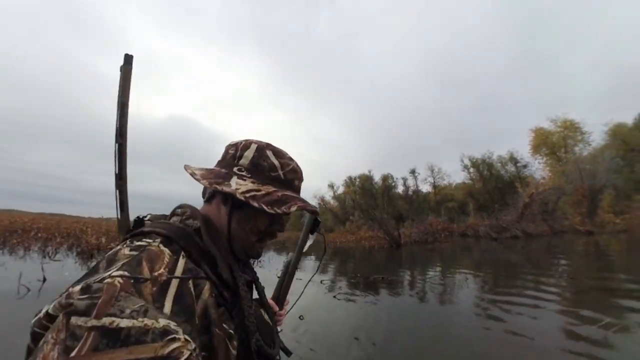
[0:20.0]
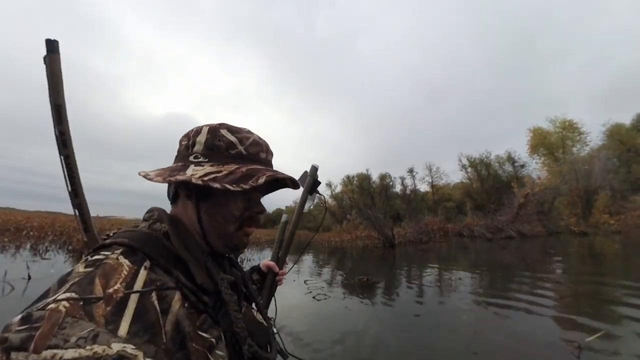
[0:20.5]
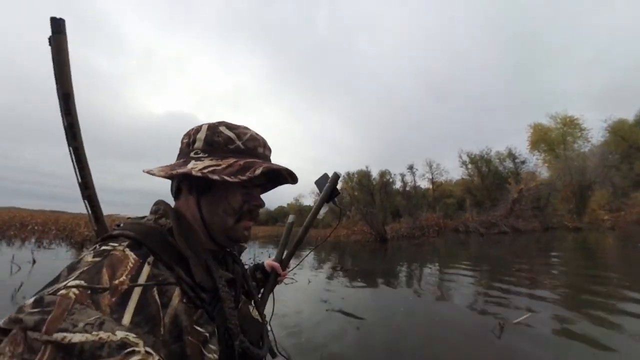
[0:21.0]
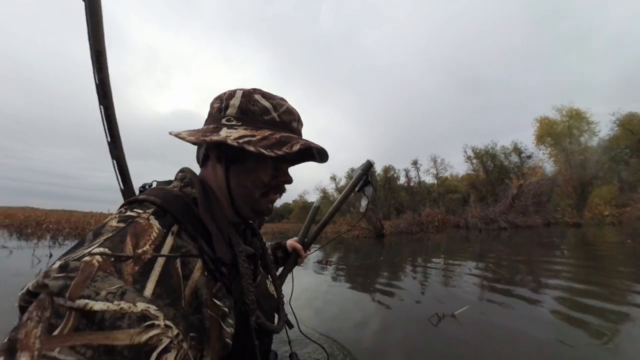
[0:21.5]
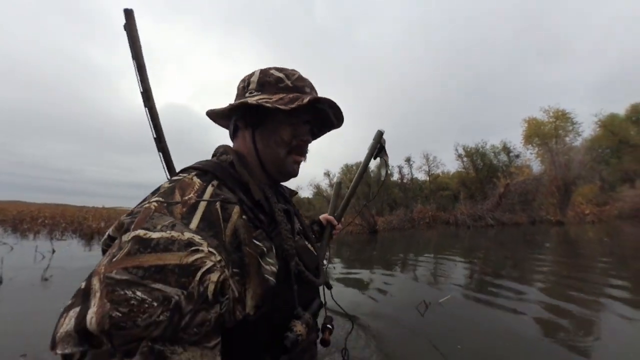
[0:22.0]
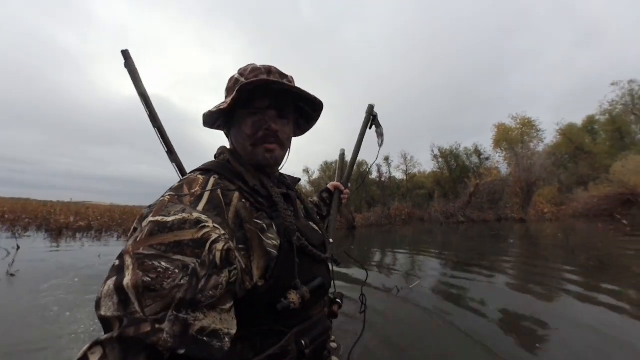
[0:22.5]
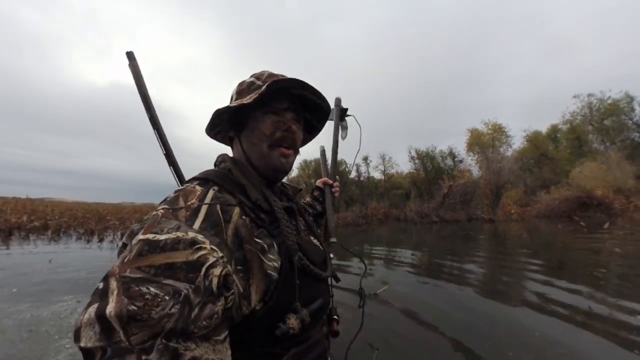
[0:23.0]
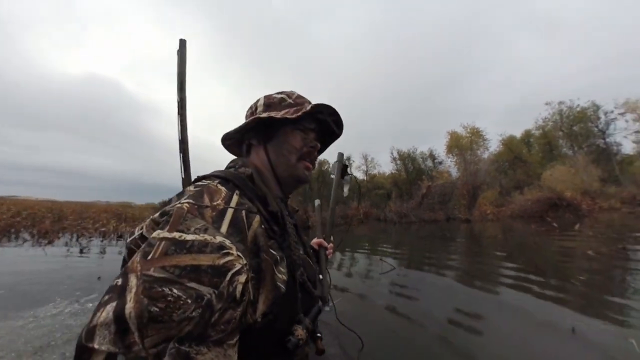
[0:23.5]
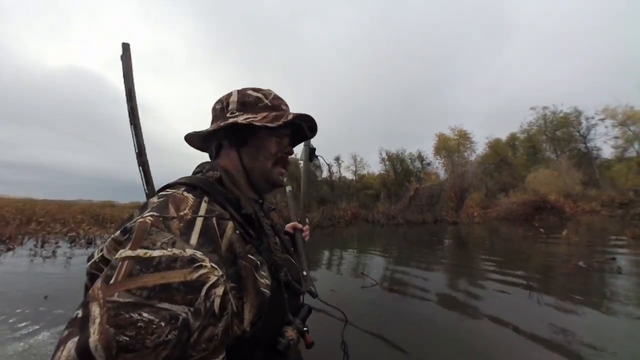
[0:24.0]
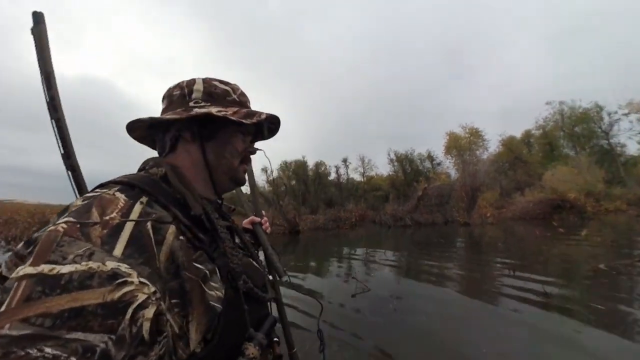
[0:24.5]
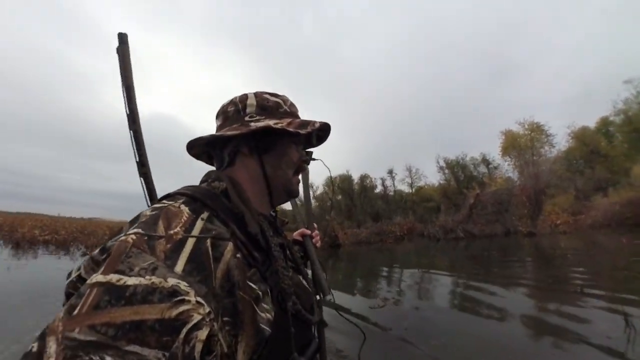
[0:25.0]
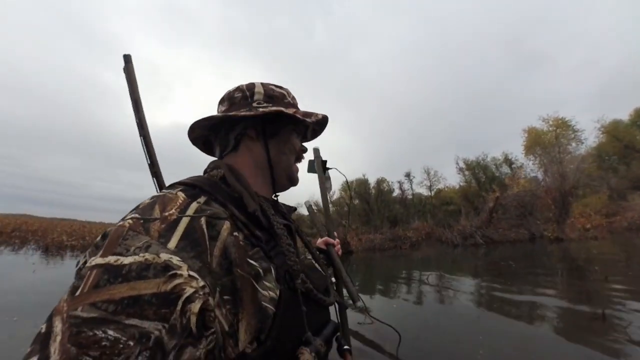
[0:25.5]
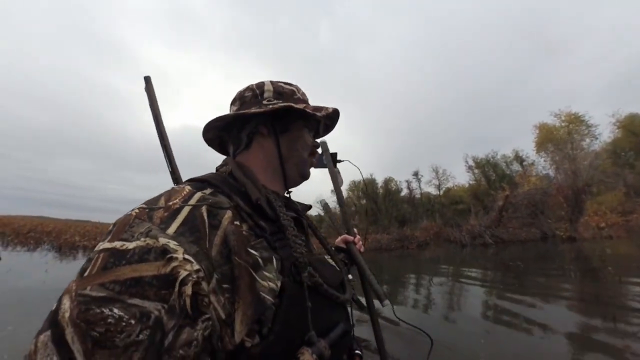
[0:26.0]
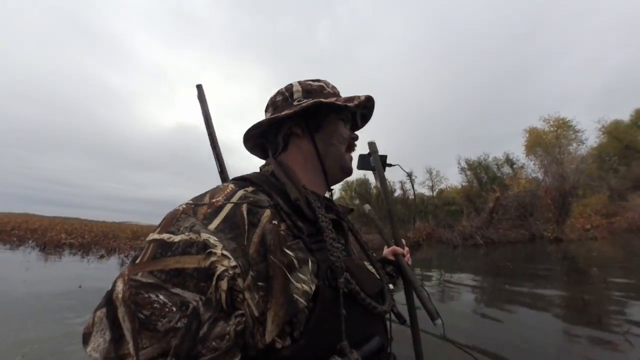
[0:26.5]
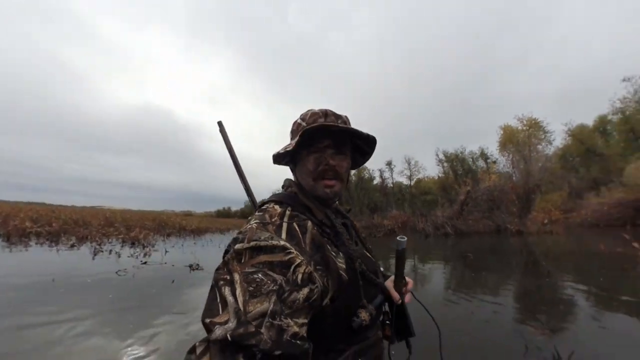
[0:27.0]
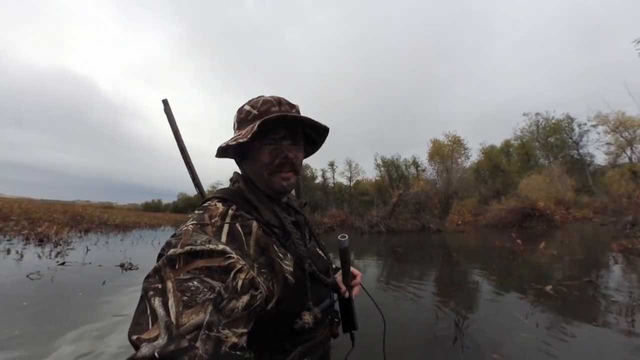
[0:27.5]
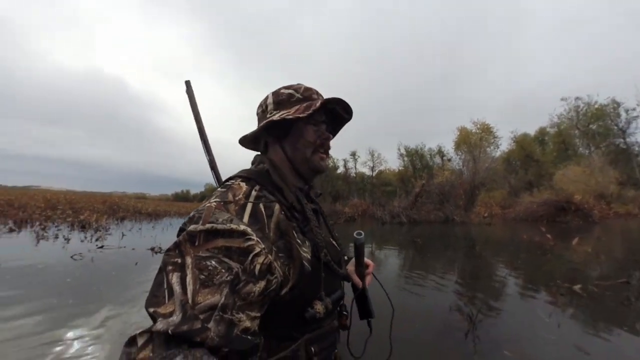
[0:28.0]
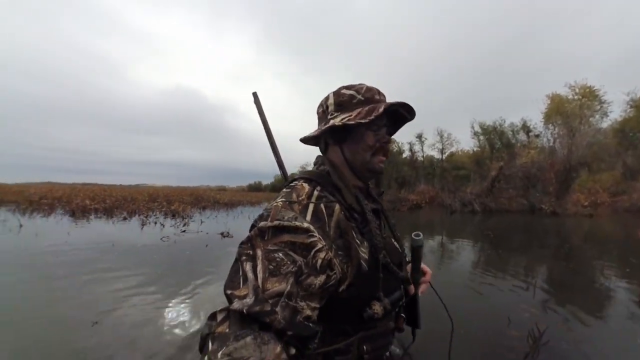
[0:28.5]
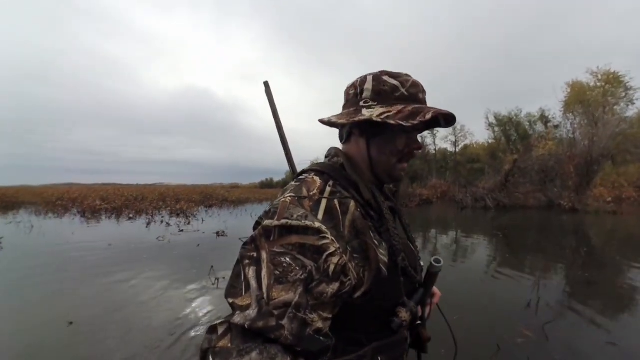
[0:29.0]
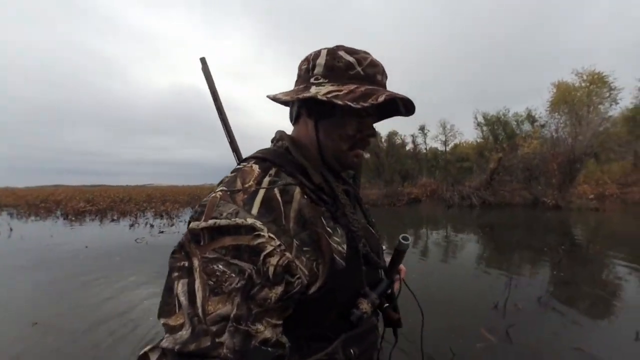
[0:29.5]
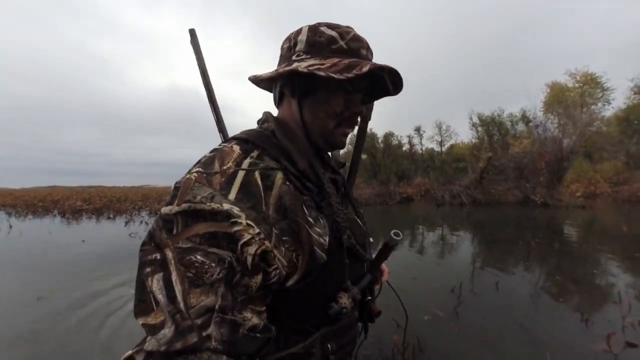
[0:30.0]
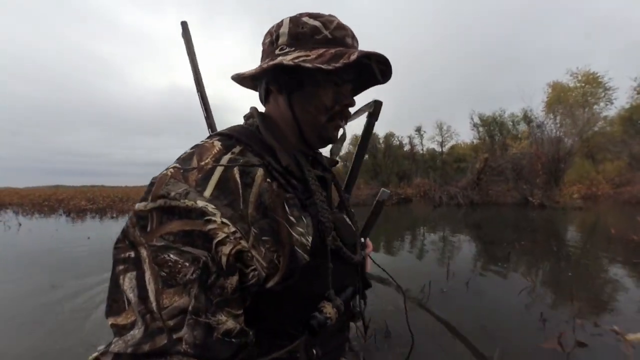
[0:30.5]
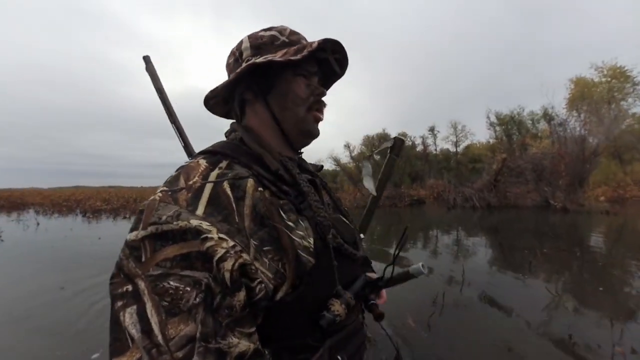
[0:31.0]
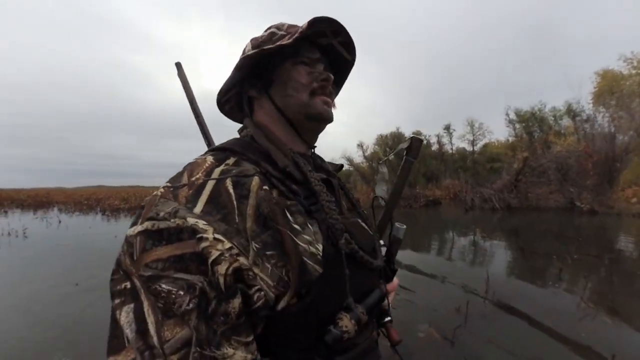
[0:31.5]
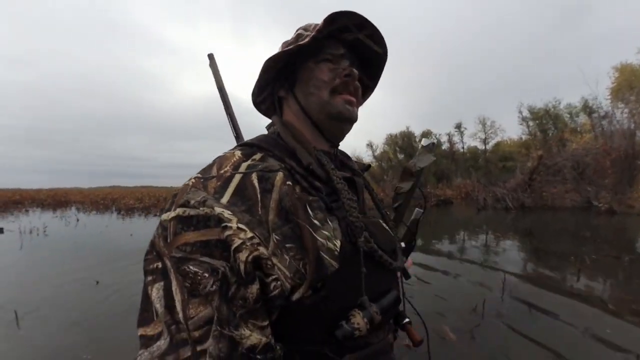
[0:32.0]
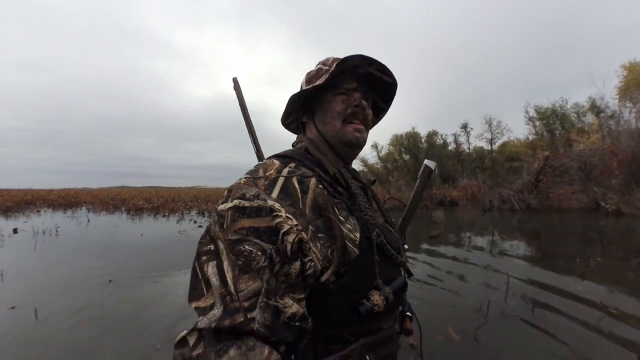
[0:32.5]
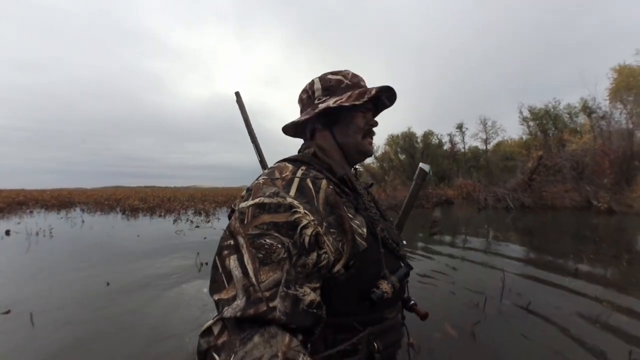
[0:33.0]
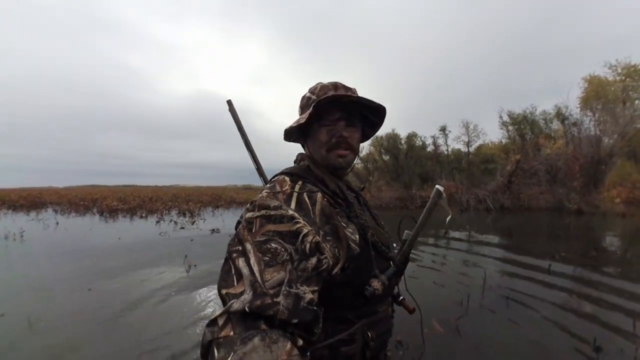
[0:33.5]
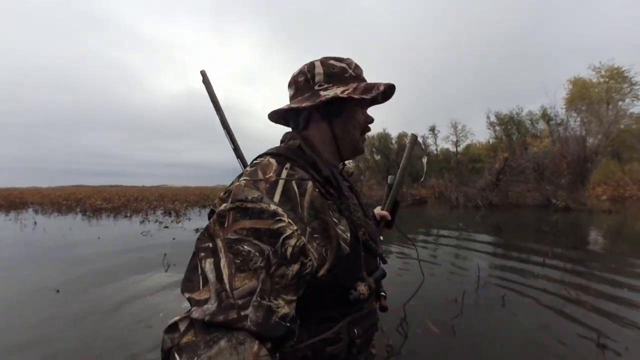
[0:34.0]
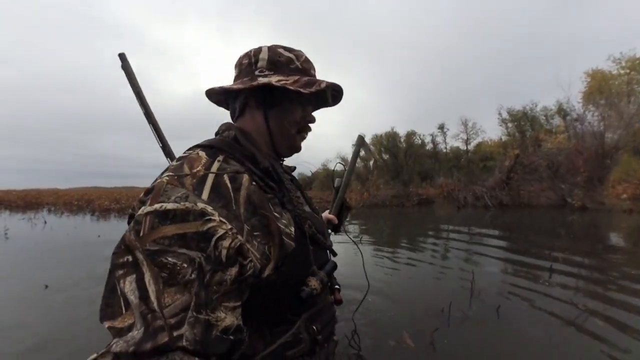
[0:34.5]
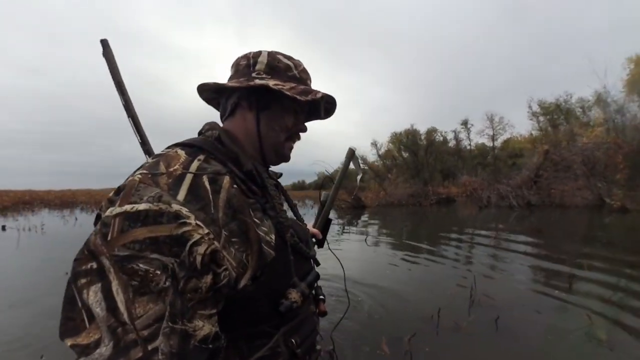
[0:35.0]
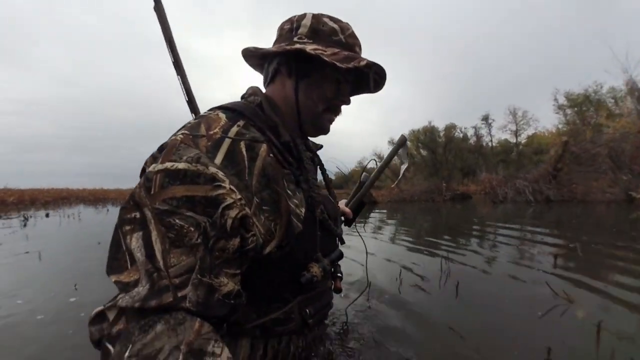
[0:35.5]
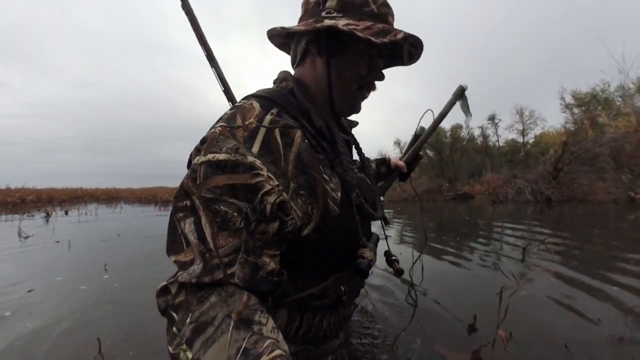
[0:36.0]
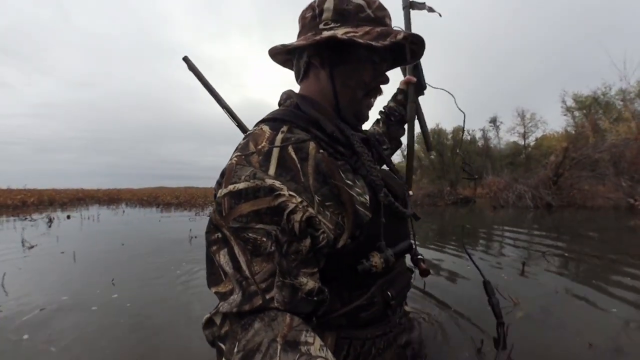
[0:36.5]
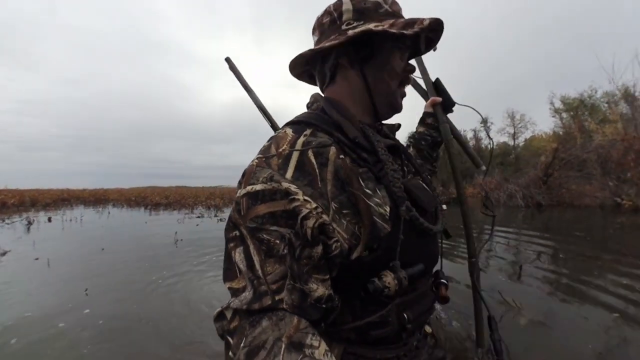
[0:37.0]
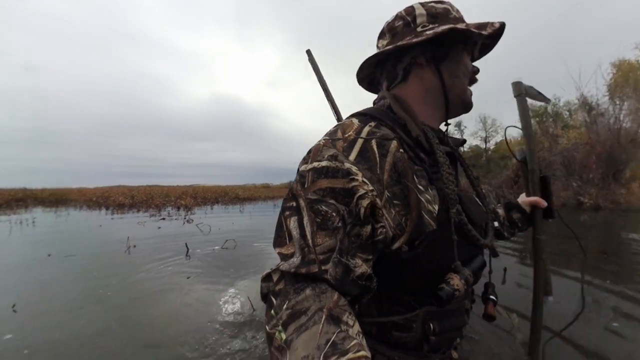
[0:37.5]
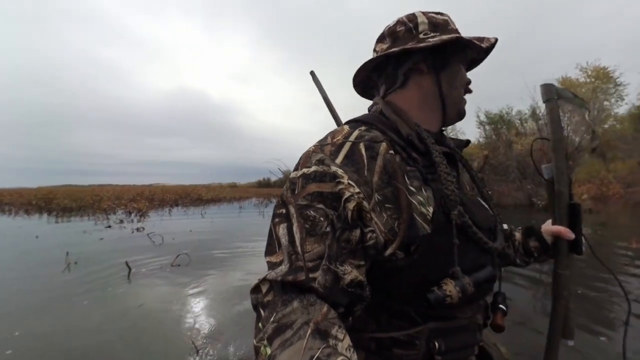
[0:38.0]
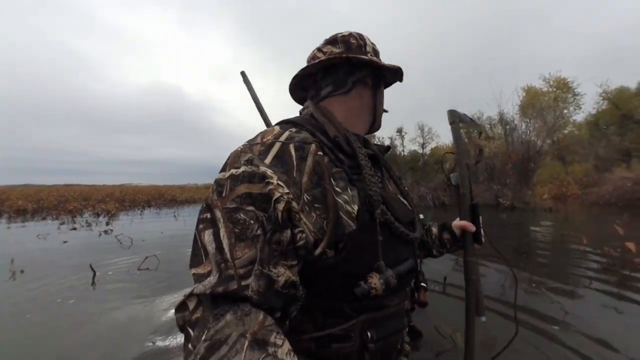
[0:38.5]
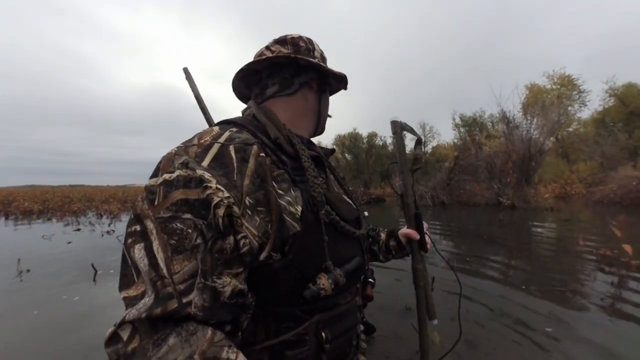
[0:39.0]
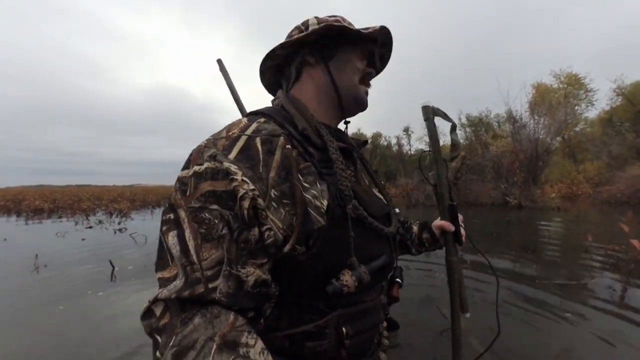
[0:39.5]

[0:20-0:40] The man holds the camera with his right hand and has some equipment on his left arm. He has a stick, probably used to steady himself in the mud so he does not fall or get stuck. His rifle is on his back, aimed toward the sky. His clothes seem to help him camouflage himself in this environment, with colors close to the background, brown to green. He wears a hat that covers every part of his head, even the back, with a line running from one corner to the other that can be placed below his mouth, at his throat.